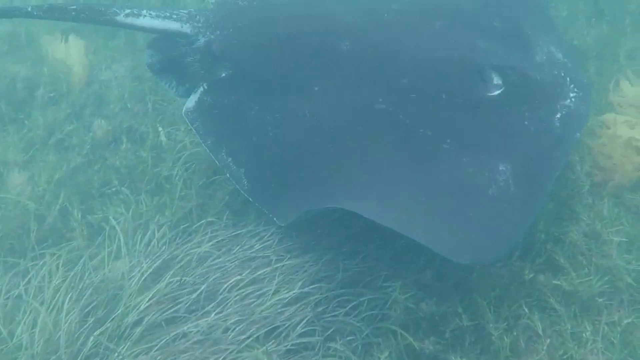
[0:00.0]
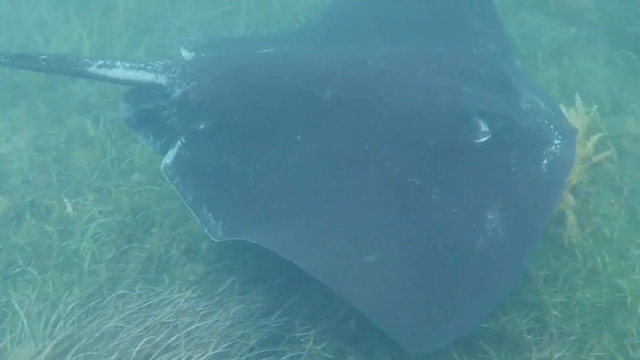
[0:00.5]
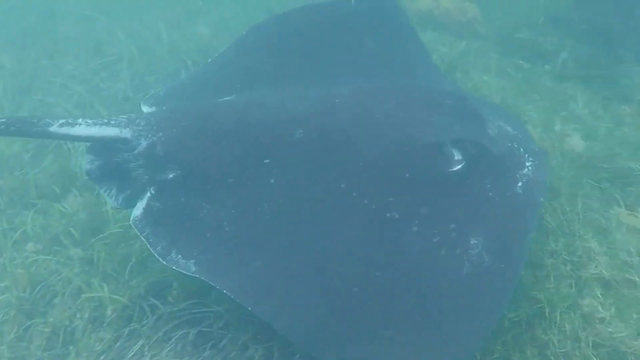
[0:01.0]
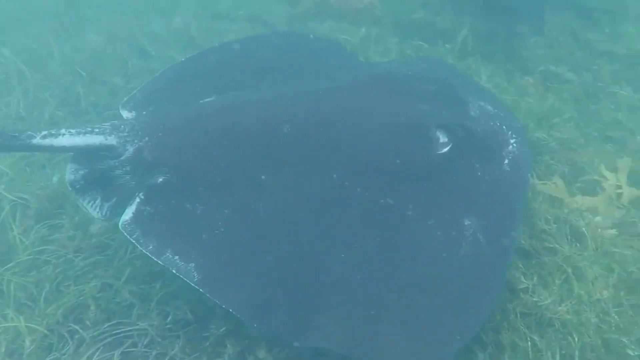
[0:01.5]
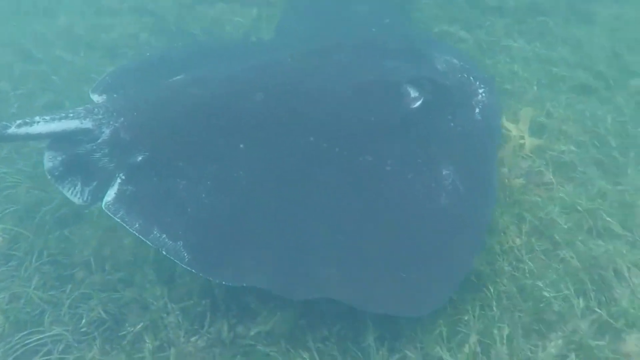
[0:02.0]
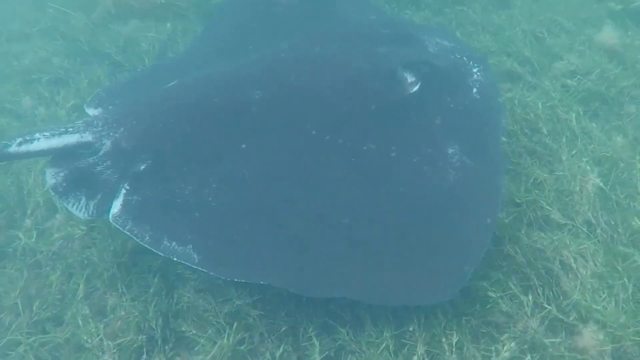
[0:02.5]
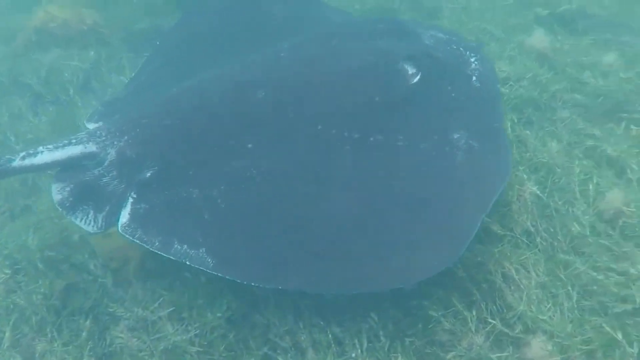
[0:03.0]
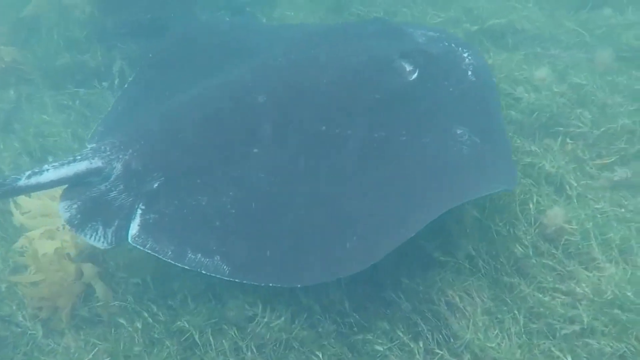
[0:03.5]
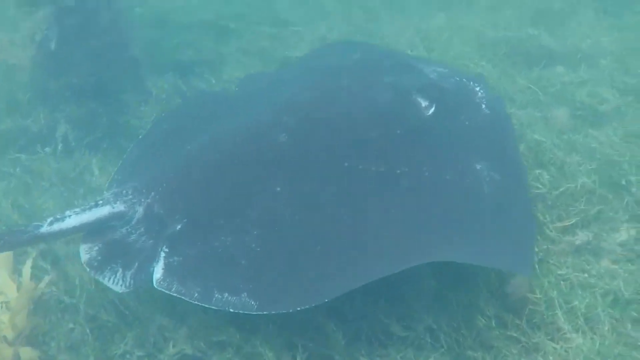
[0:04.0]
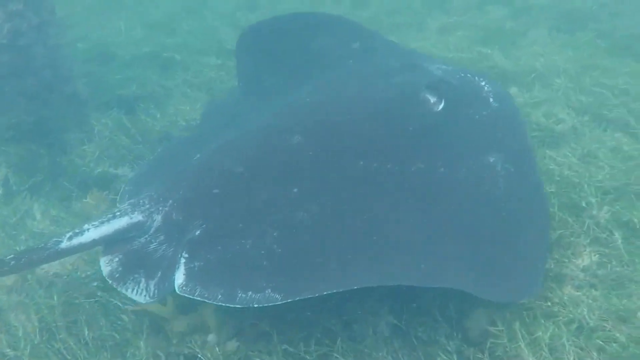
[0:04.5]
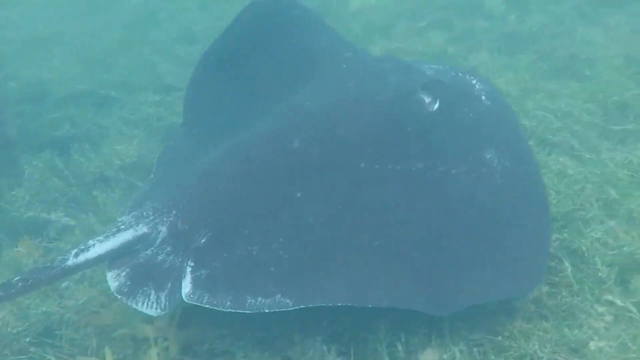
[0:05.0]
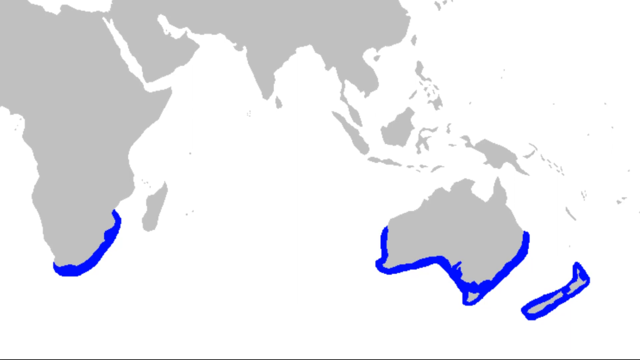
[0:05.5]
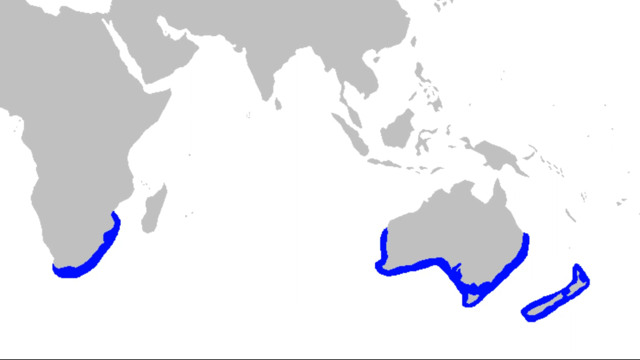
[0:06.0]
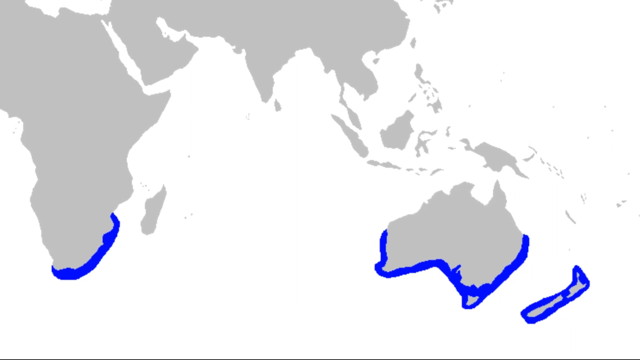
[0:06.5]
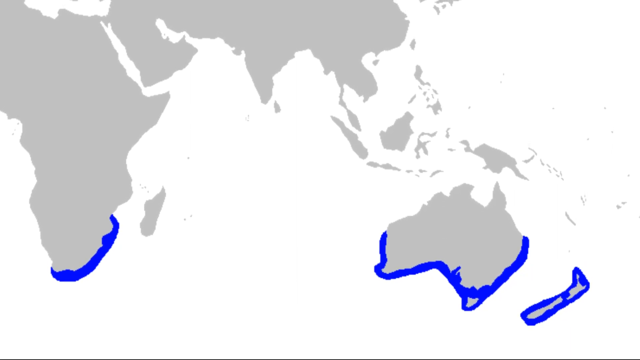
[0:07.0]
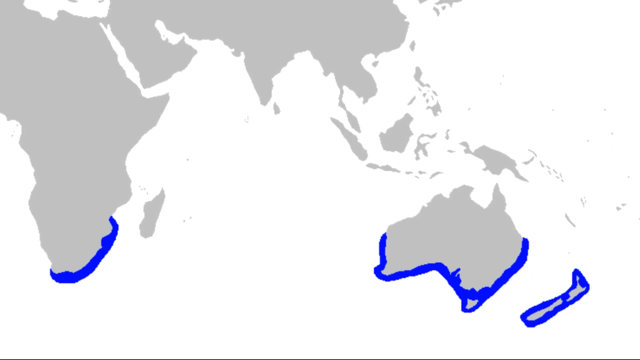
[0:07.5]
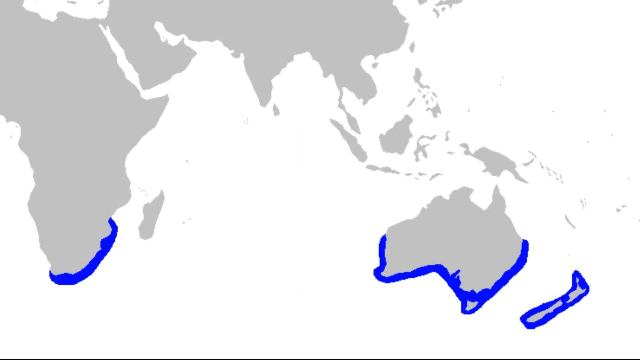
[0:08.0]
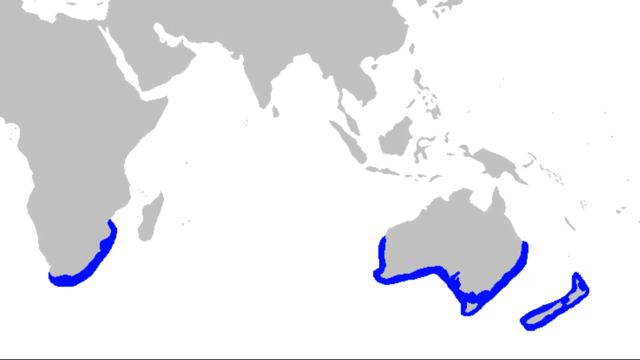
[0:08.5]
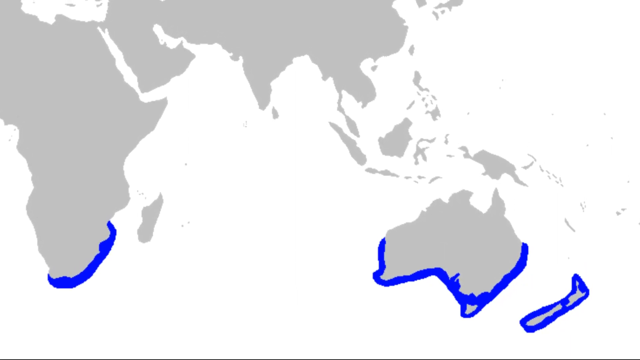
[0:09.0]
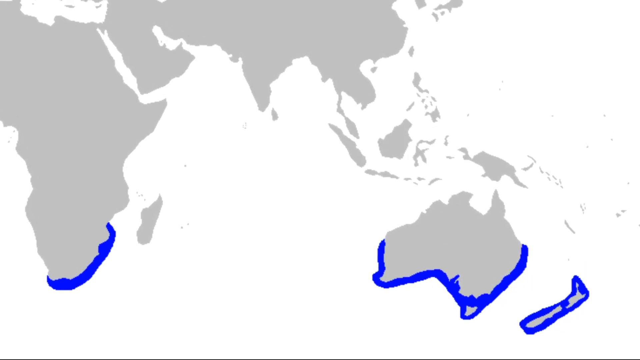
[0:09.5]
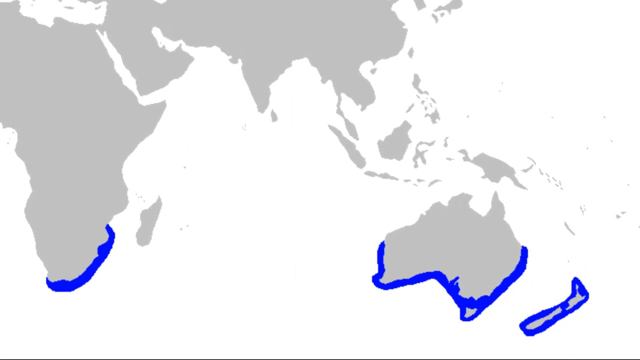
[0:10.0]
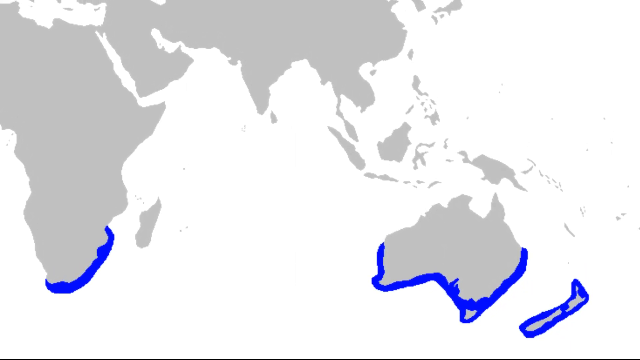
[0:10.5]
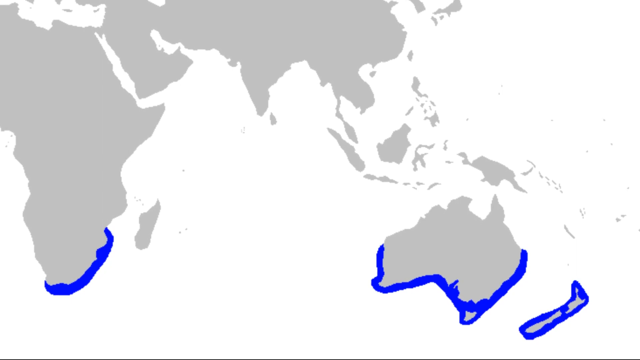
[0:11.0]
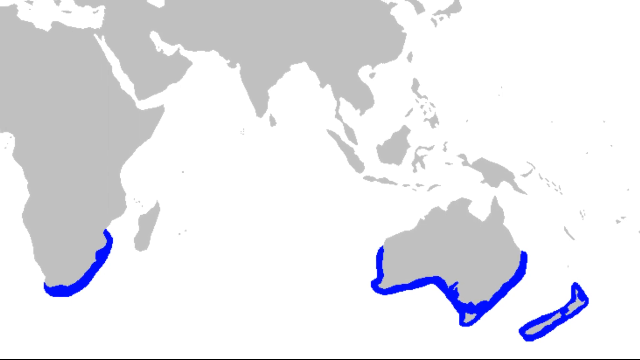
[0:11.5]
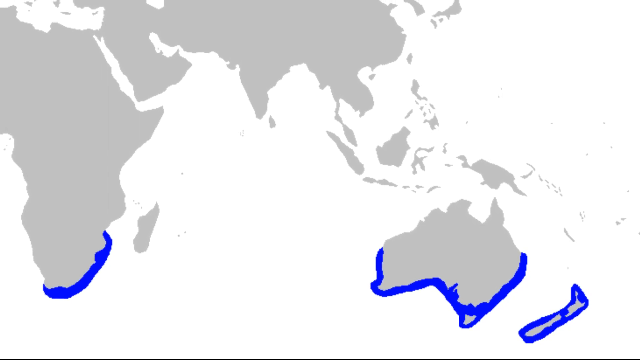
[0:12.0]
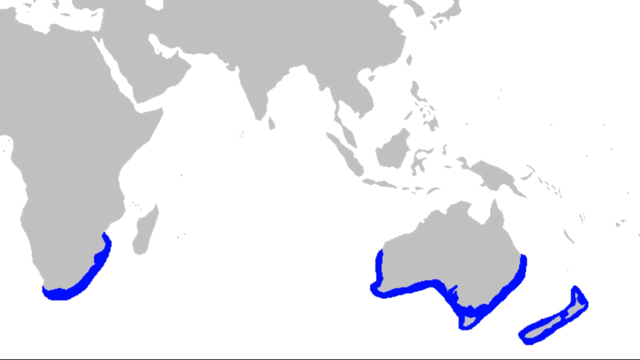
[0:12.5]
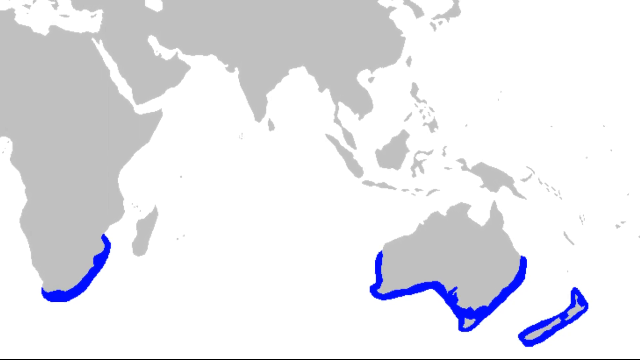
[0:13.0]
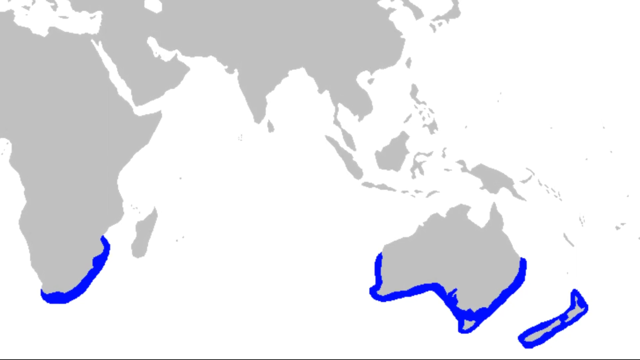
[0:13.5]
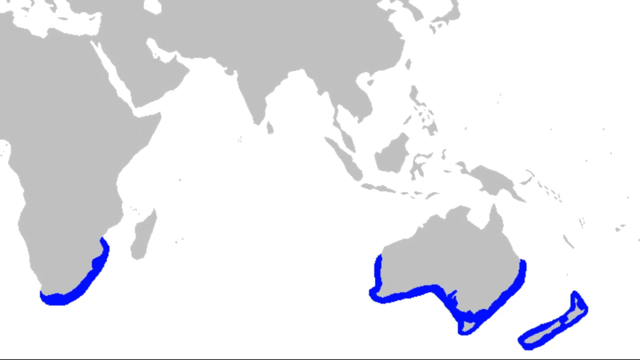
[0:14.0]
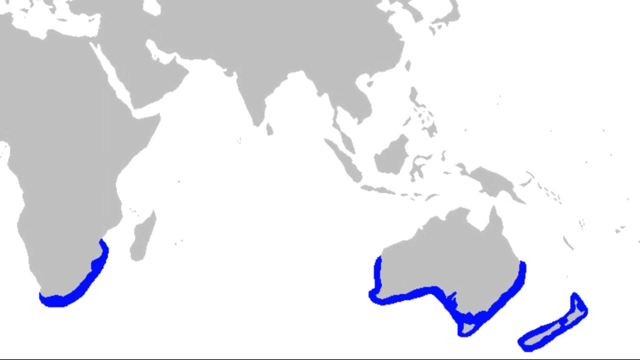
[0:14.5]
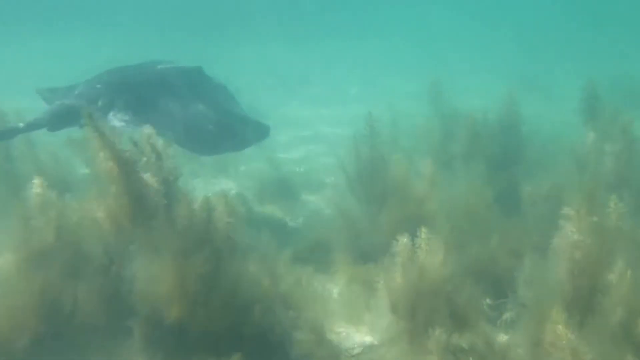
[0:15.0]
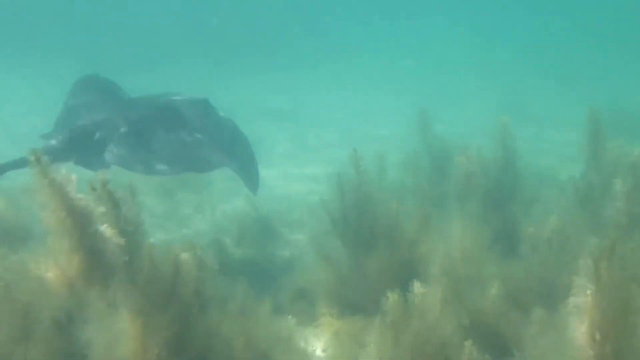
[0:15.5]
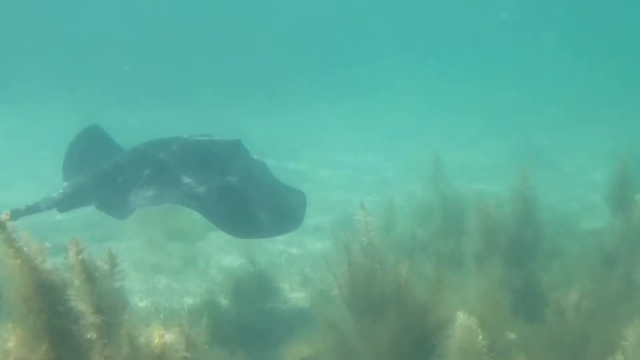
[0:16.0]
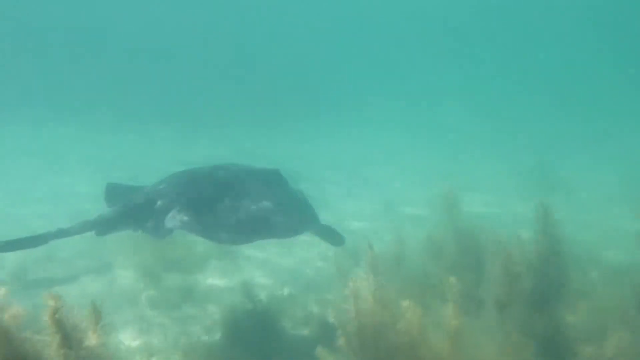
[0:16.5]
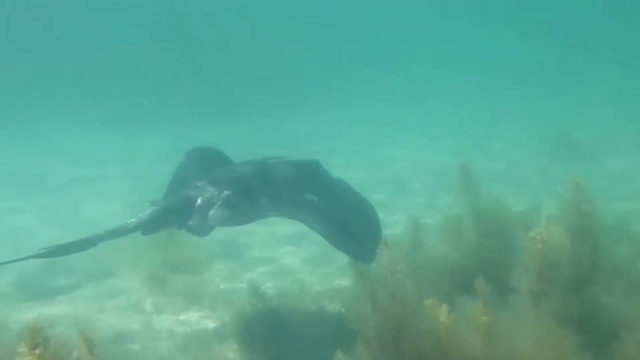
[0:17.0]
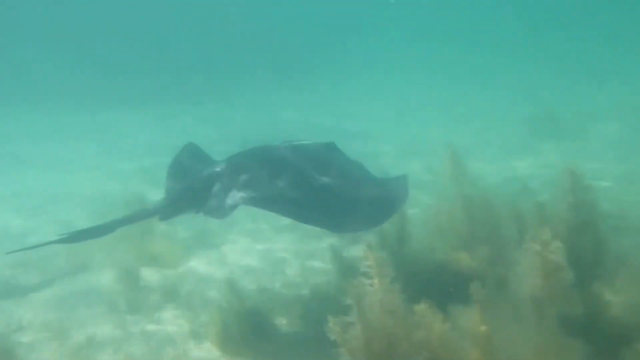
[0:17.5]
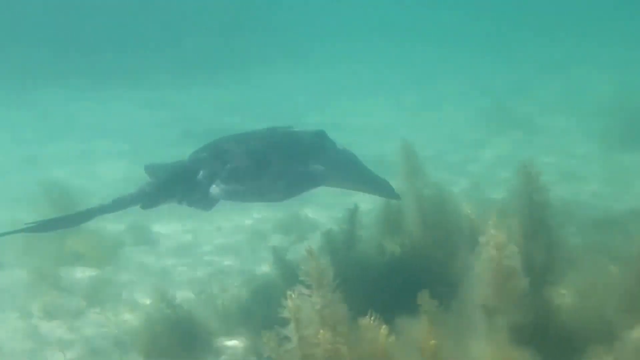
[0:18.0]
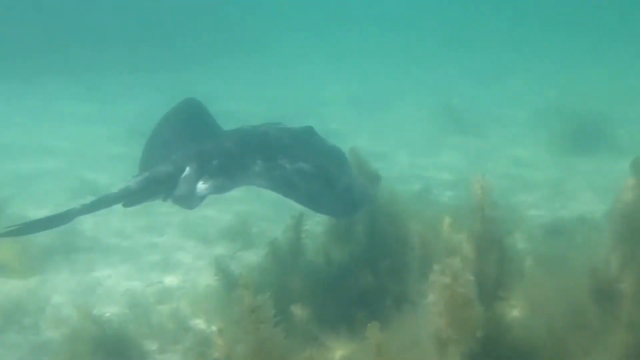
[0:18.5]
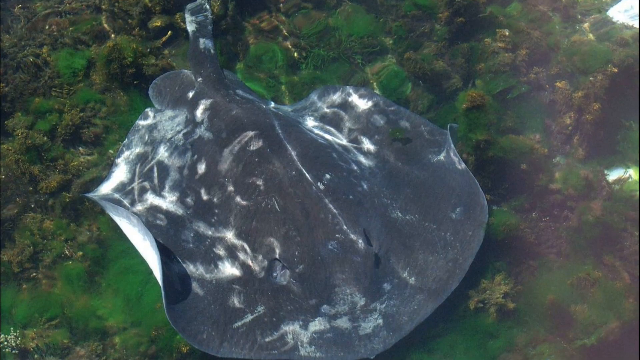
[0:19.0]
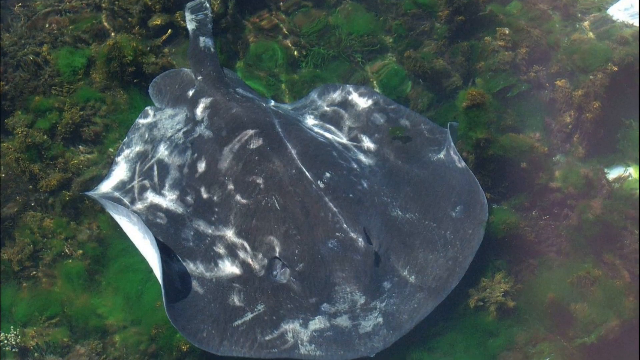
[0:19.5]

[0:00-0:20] A large stingray swims at the ocean floor, travelling across a large amount of seaweed at the bottom. The stingray is mostly black or grey. Next, a map shows a southern region of the coast of Australia highlighted in bright blue, and some islands off the coast of Australia are highlighted in dark blue. A stingray is then seen swimming at the ocean floor again. The ocean floor is very calm, the water is very green and clear, and some seaweed flows underneath the stingray. The stingray has a long tail. Next, a stingray is on some rocks; it does not appear to be in the ocean but rather looks like it is above water.